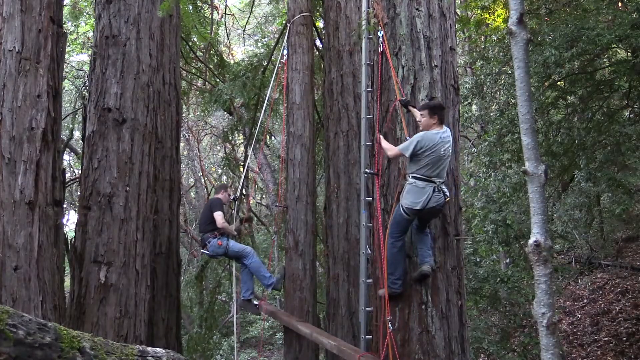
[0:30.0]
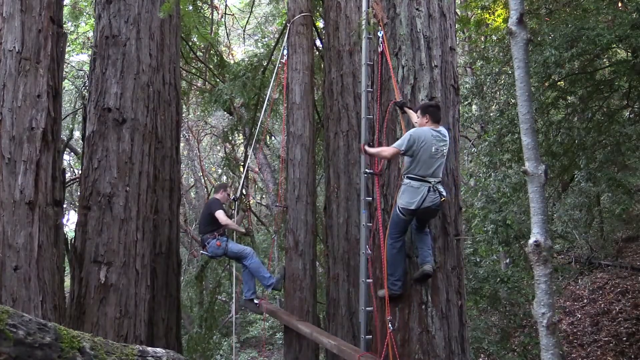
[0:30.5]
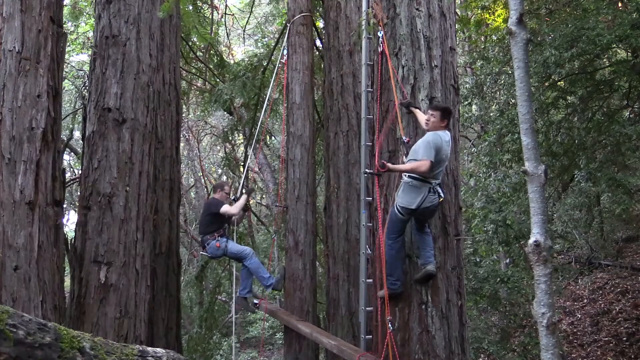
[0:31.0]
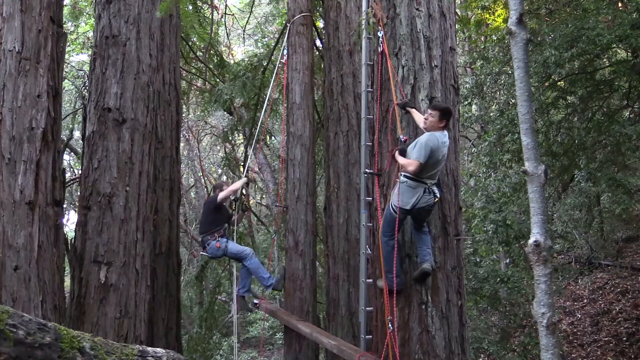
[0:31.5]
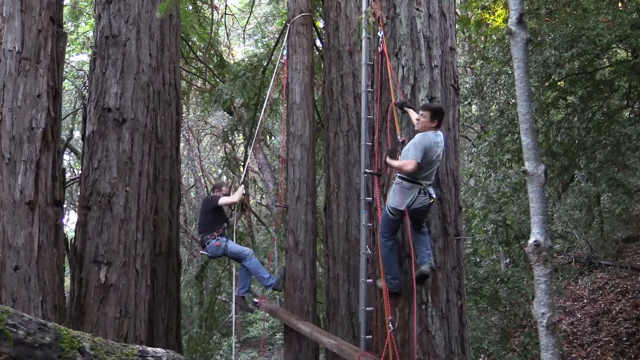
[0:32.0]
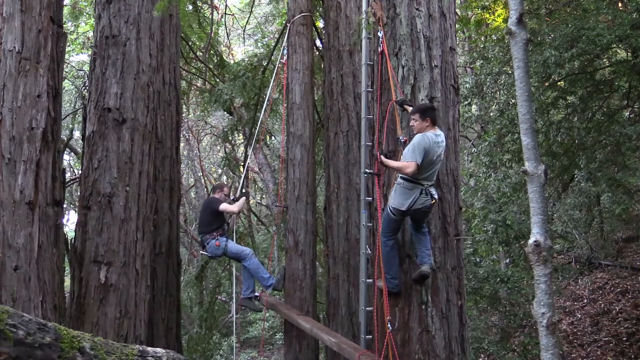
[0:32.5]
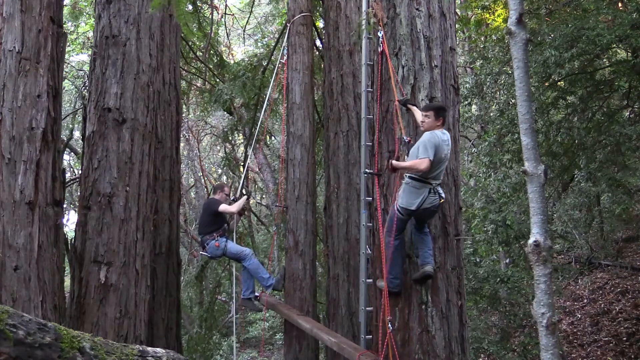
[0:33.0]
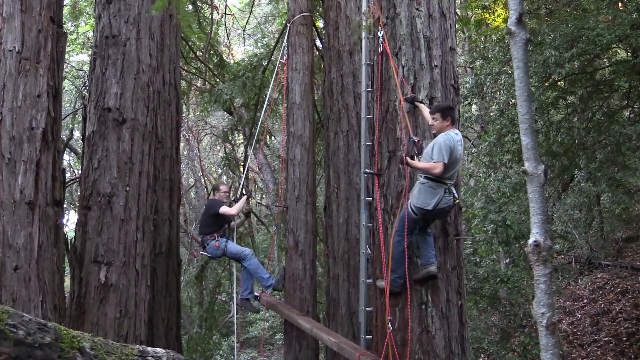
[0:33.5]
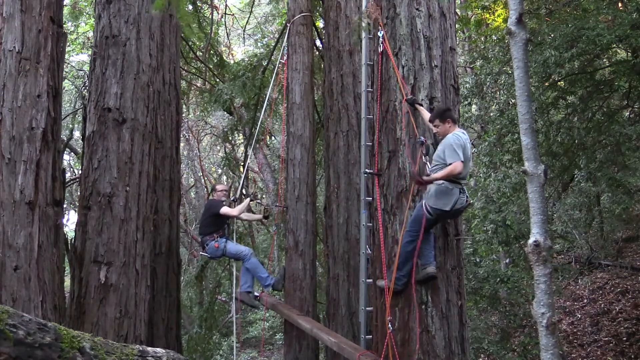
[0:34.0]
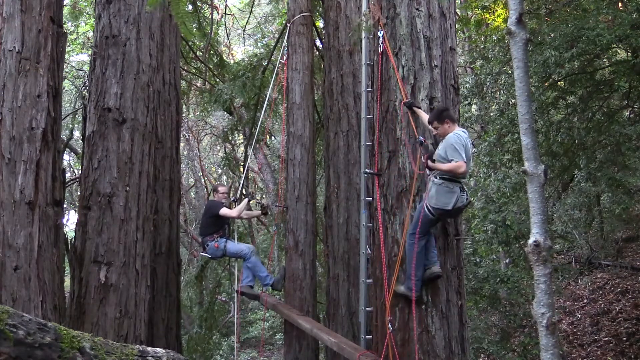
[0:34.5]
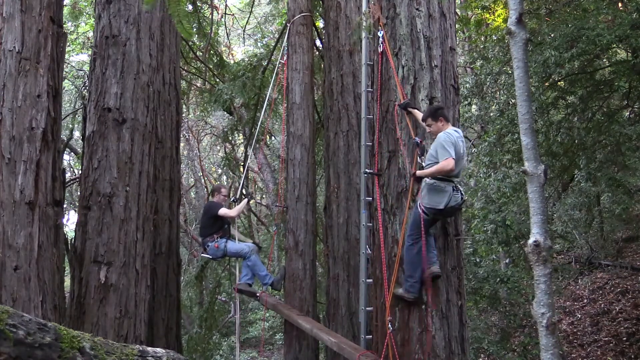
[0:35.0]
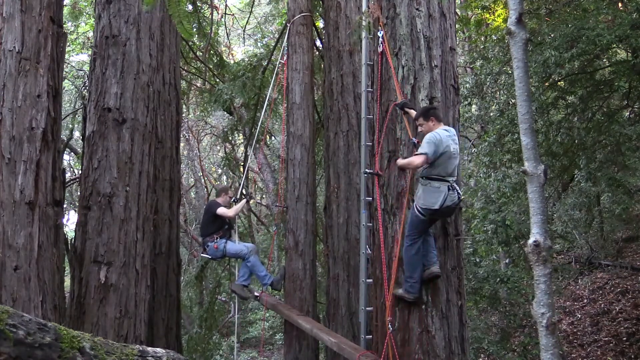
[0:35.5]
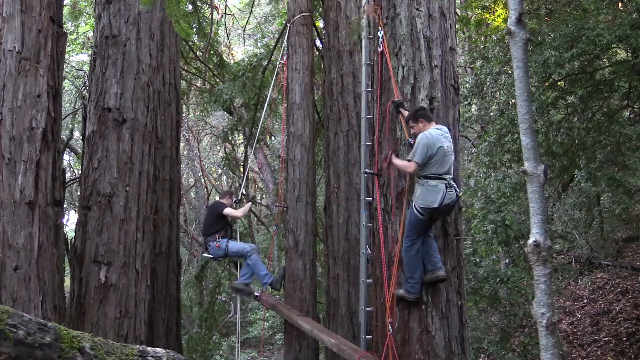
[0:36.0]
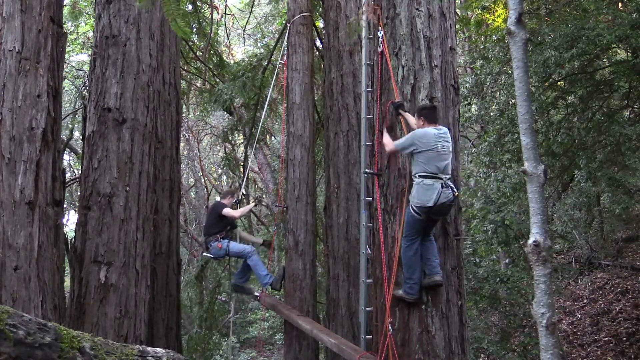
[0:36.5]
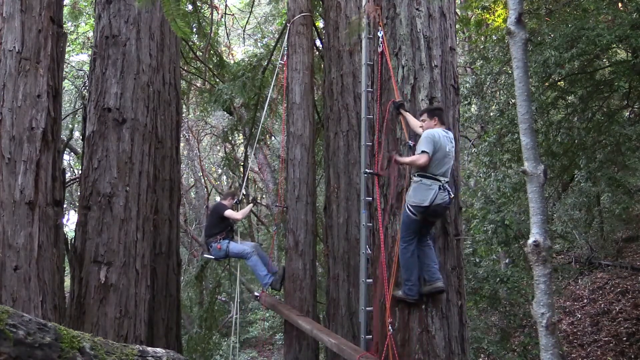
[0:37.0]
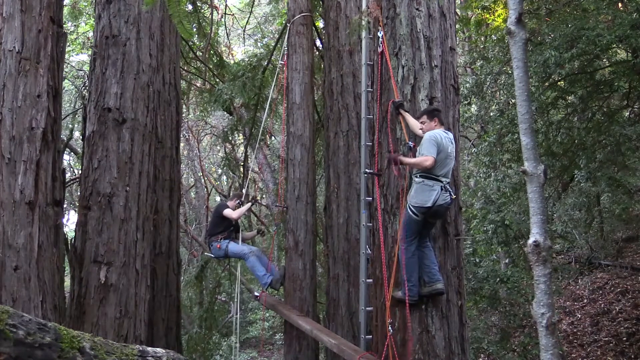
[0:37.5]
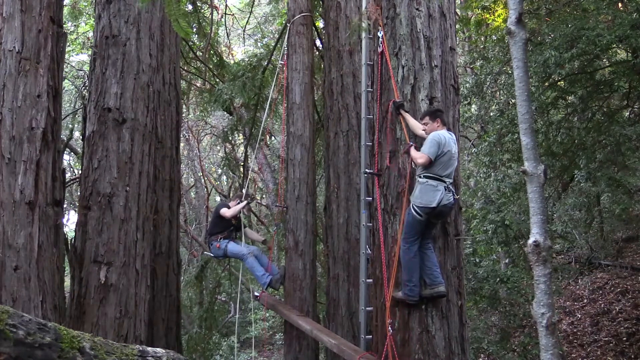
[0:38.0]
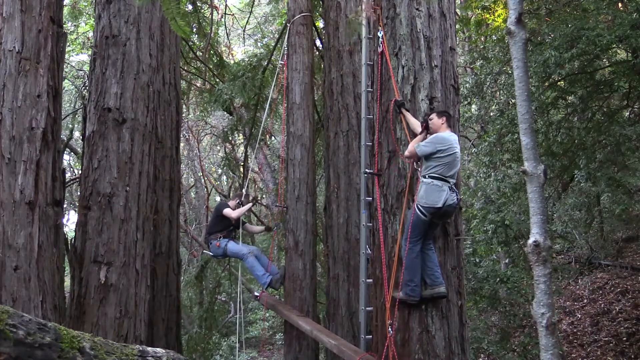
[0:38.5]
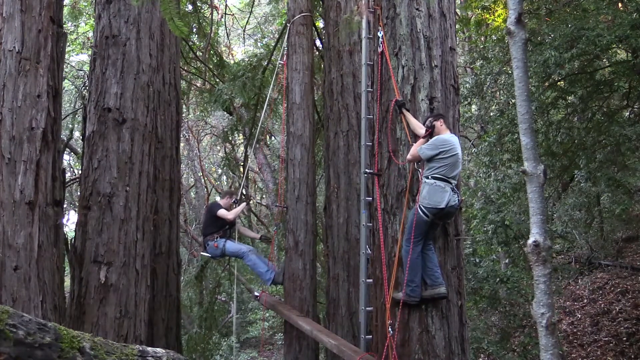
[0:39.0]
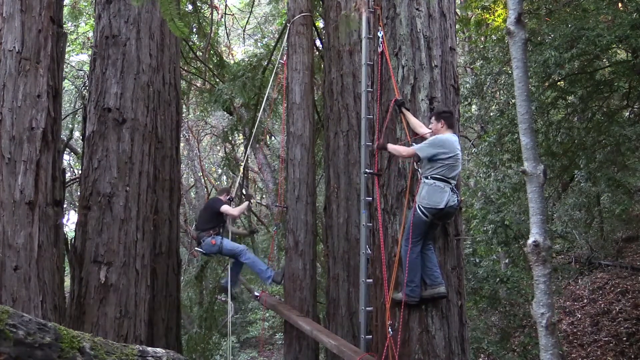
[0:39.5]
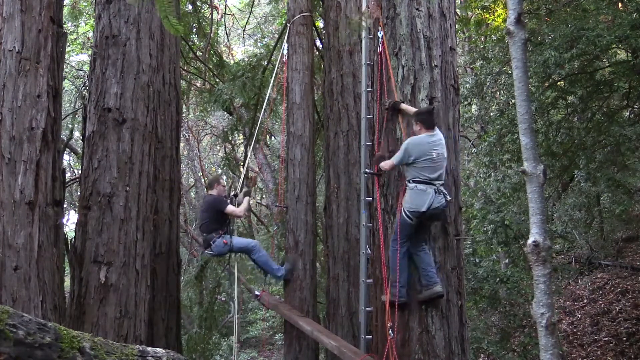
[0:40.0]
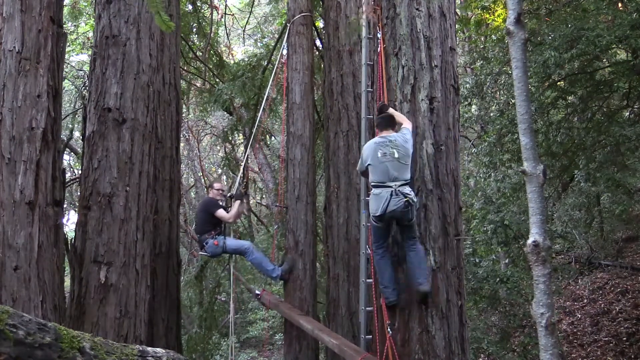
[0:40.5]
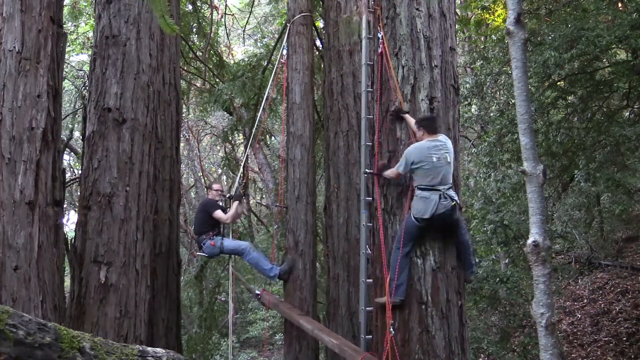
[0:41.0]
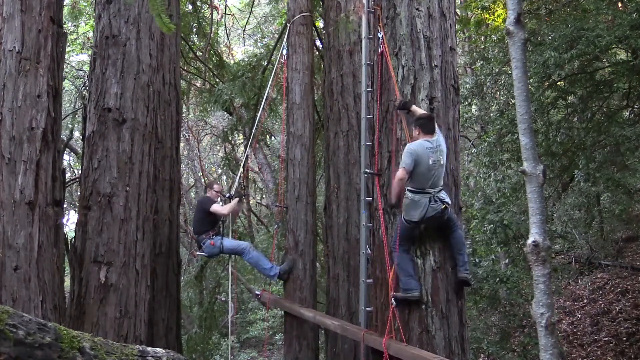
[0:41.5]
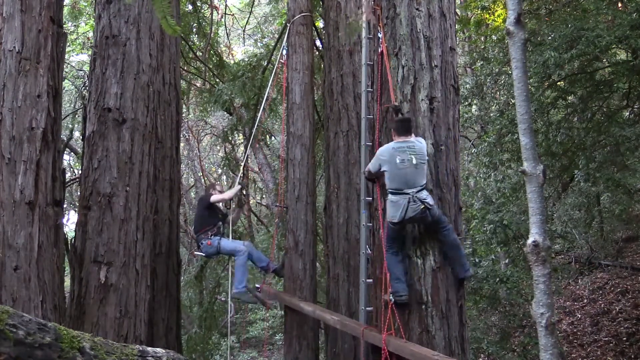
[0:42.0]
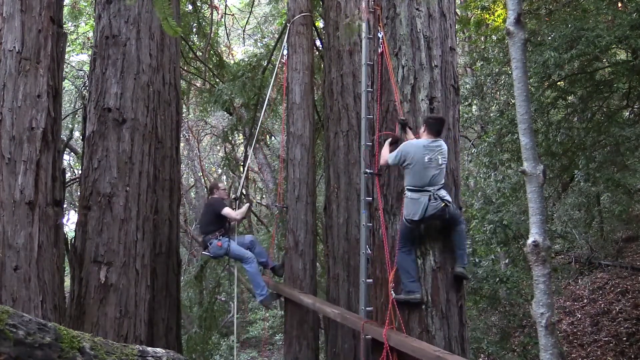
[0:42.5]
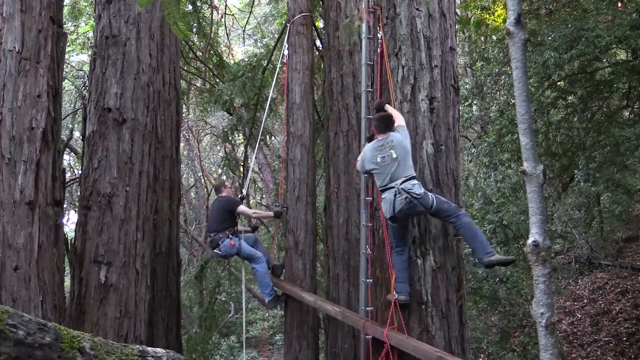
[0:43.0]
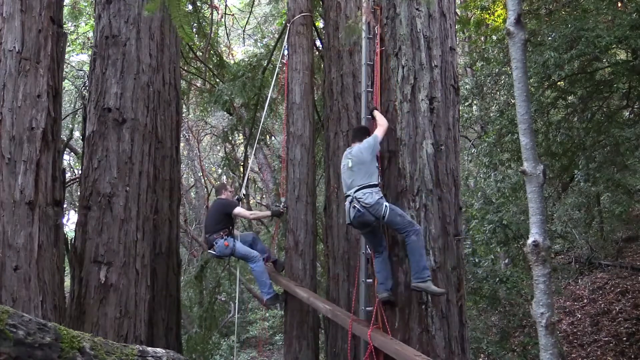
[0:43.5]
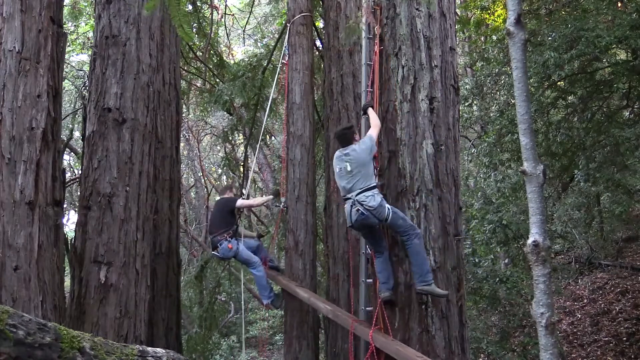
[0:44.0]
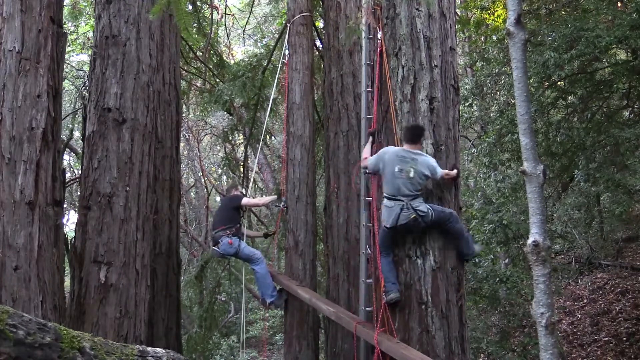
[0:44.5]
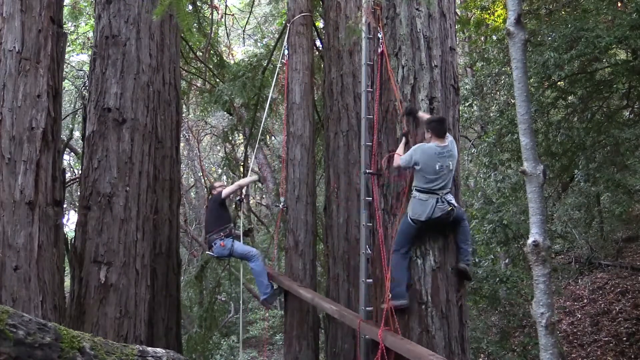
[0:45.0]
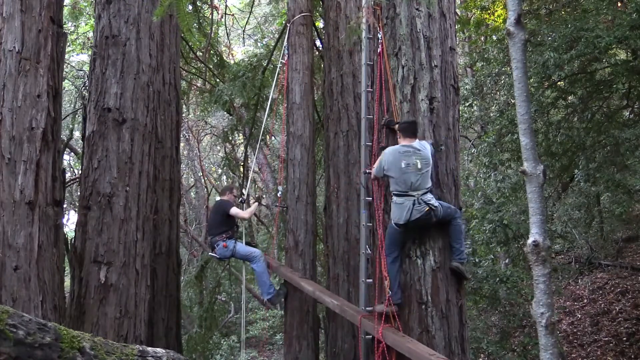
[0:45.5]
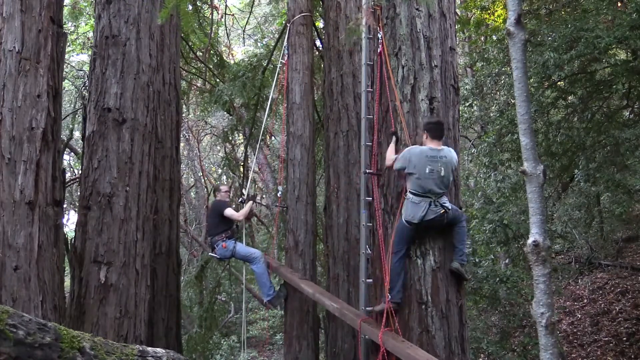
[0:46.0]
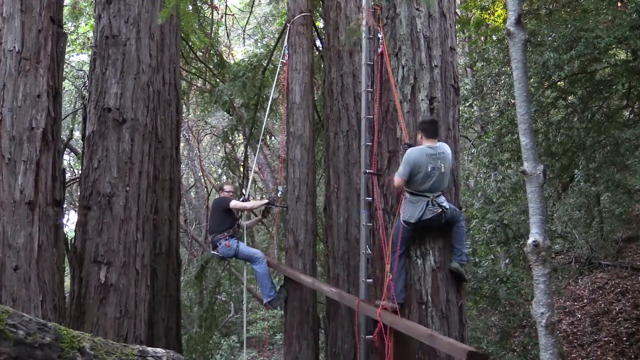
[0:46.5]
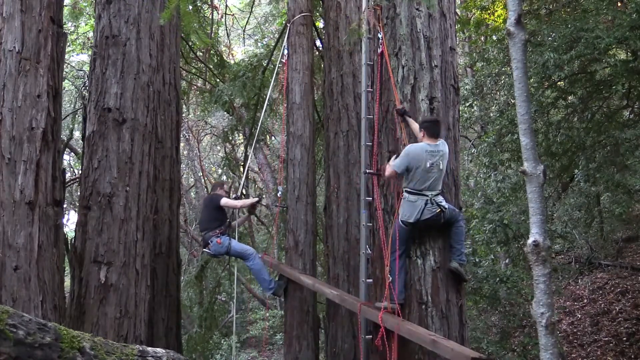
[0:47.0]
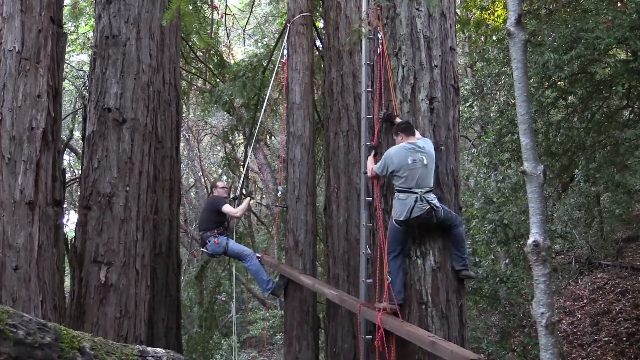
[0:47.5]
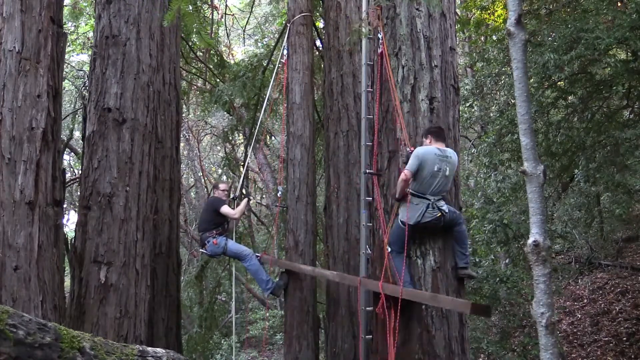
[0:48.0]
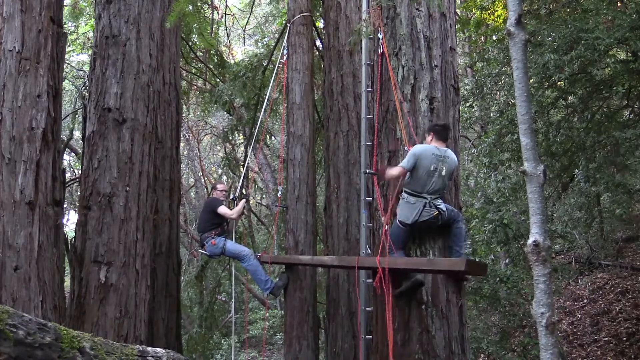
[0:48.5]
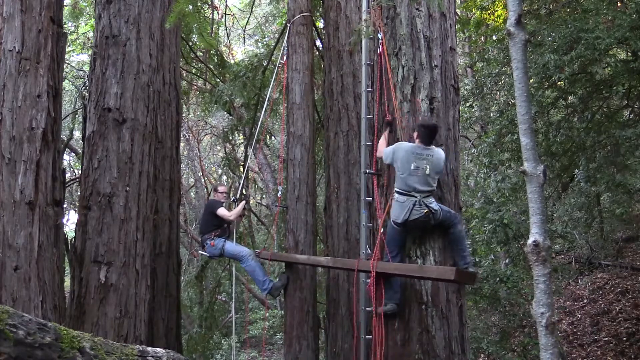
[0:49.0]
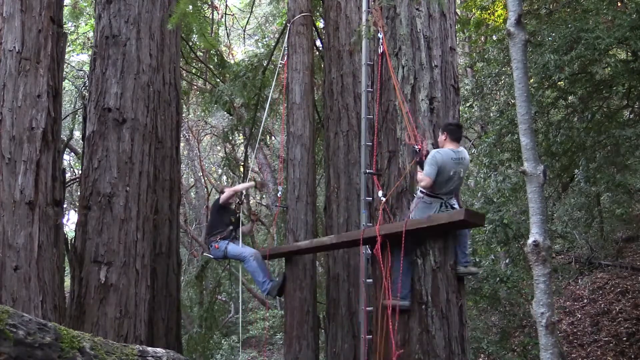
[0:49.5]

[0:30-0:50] Two men, approximately in their 40s, have climbed about halfway up a large, wide tree. They are secured to the tree by ropes, and each wears a harness around his waist and thighs. Both wear shoes or boots with spikes that stabilize them against the tree. The man on the right wears blue jeans, a black t-shirt and black gloves; the man on the left wears blue jeans, a gray t-shirt and also black gloves. They pull on a rope attached to what appears to be a beam. The man on the left appears to reposition himself, opening up his left leg and getting a better grip on the tree, and then both men begin pulling on the rope, raising the beam.